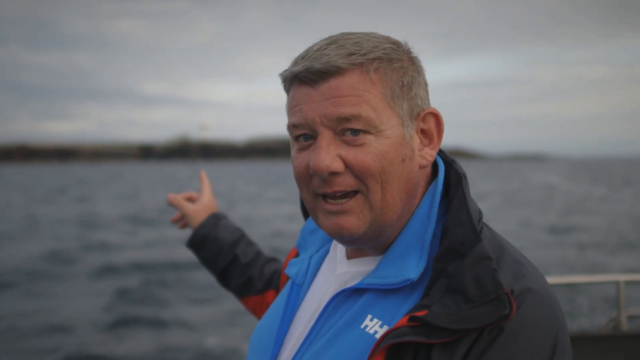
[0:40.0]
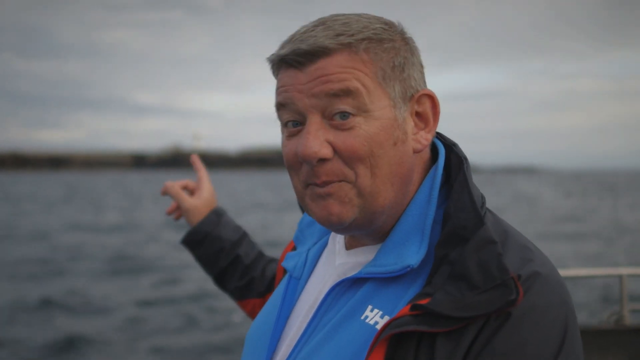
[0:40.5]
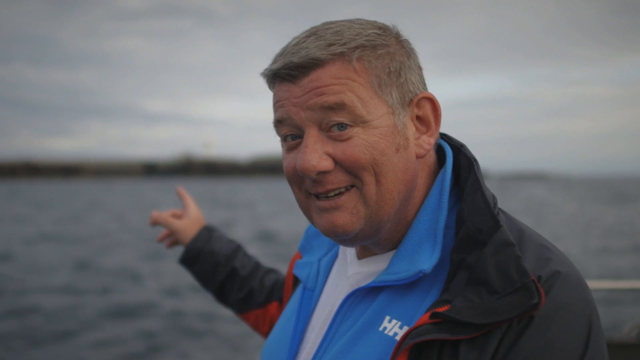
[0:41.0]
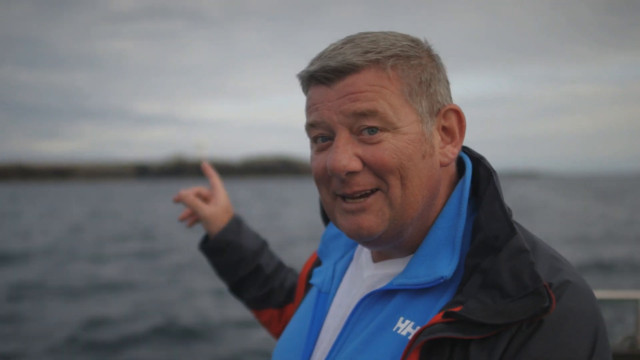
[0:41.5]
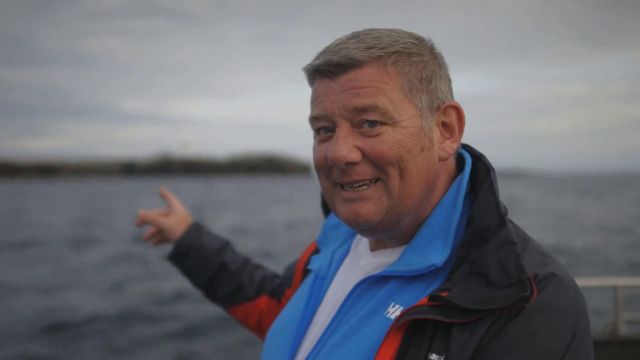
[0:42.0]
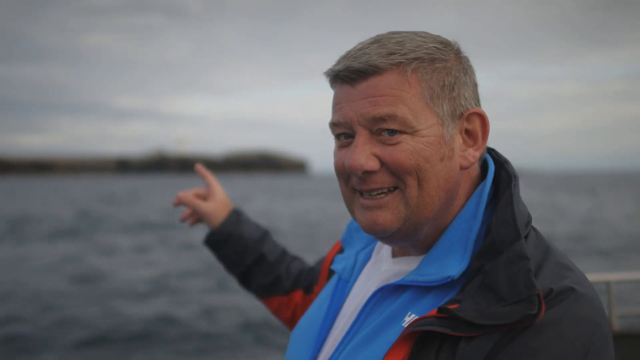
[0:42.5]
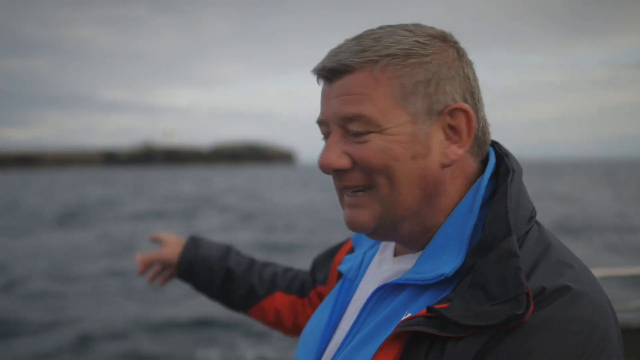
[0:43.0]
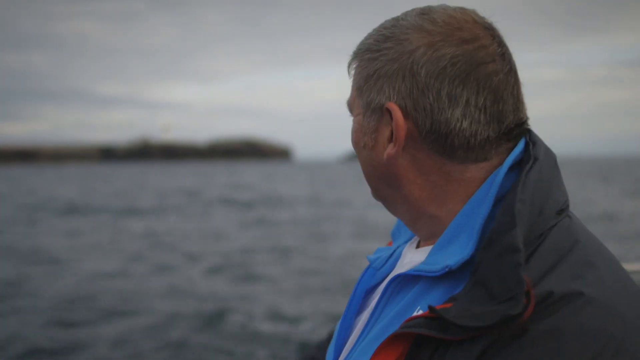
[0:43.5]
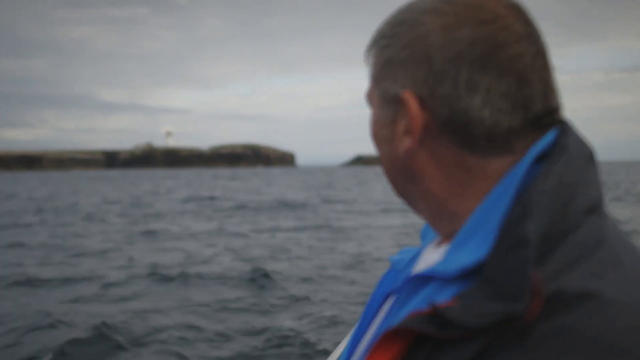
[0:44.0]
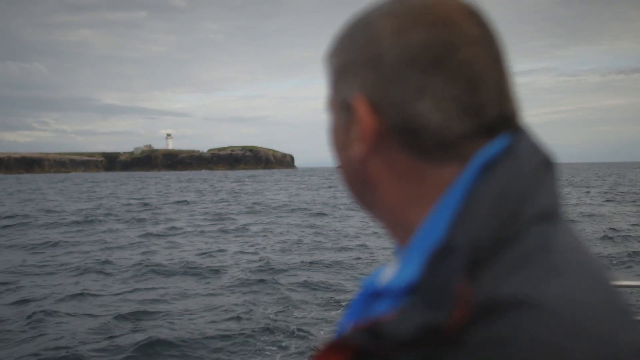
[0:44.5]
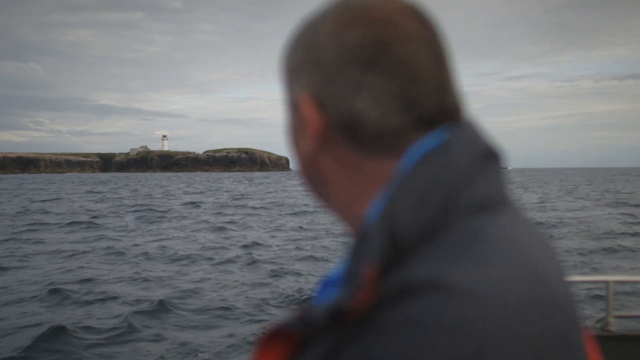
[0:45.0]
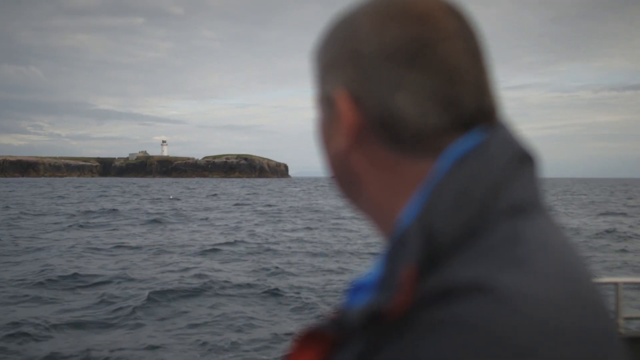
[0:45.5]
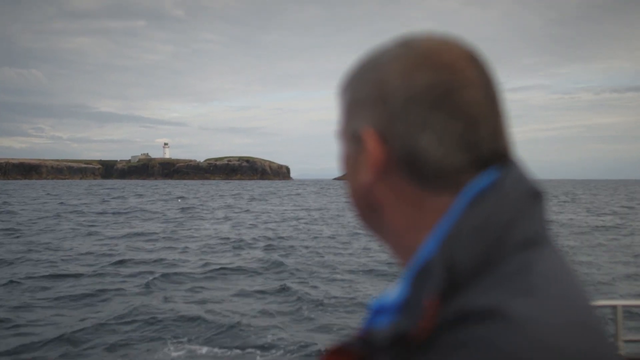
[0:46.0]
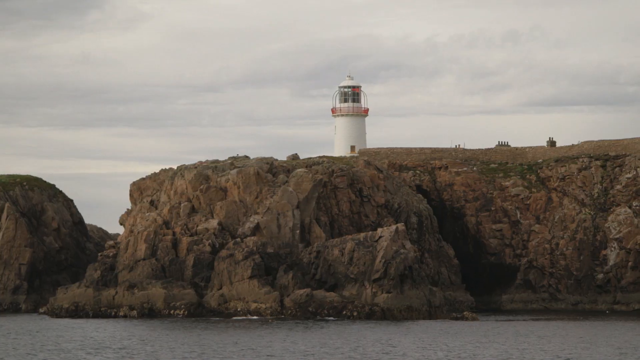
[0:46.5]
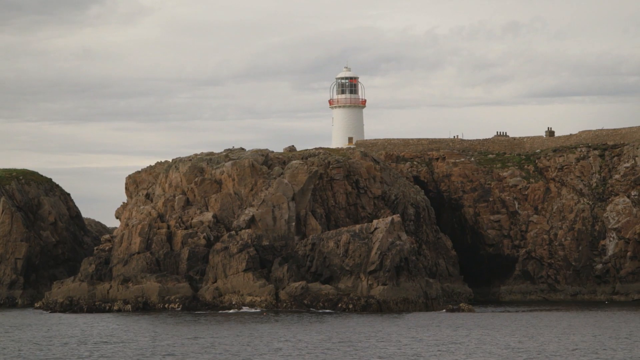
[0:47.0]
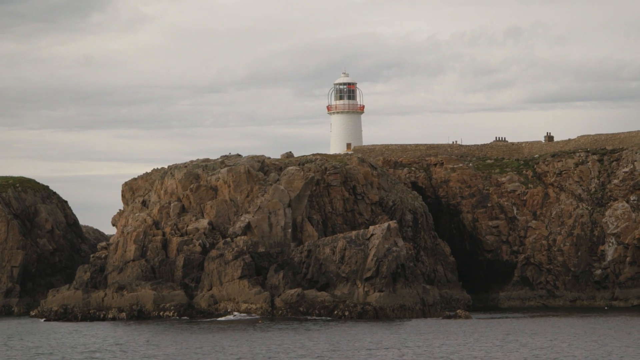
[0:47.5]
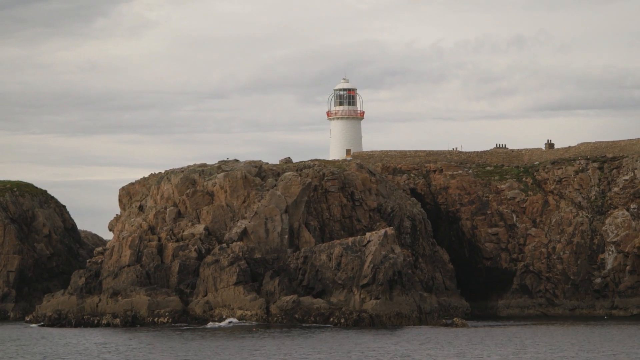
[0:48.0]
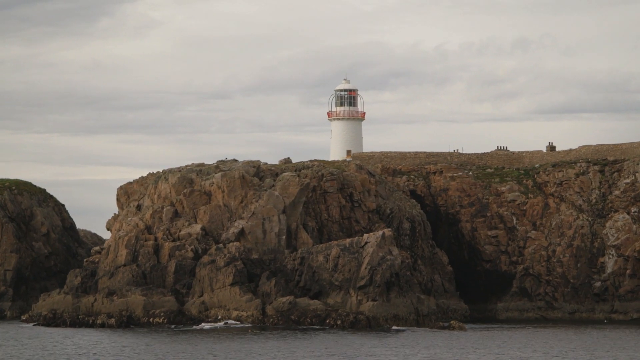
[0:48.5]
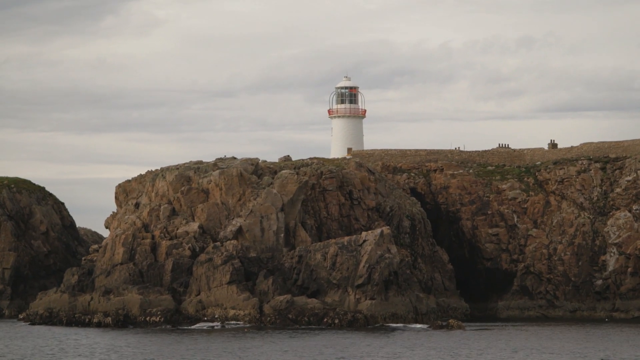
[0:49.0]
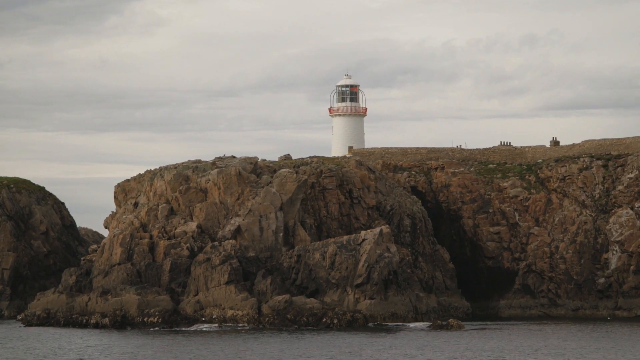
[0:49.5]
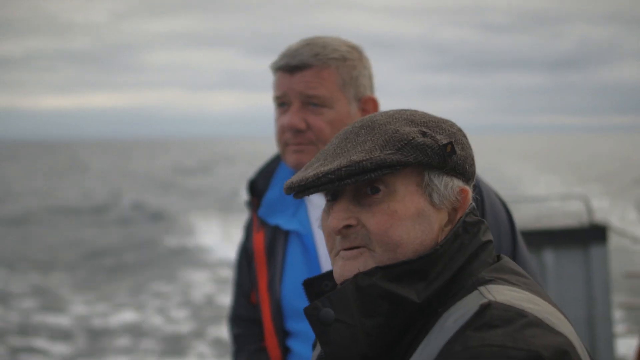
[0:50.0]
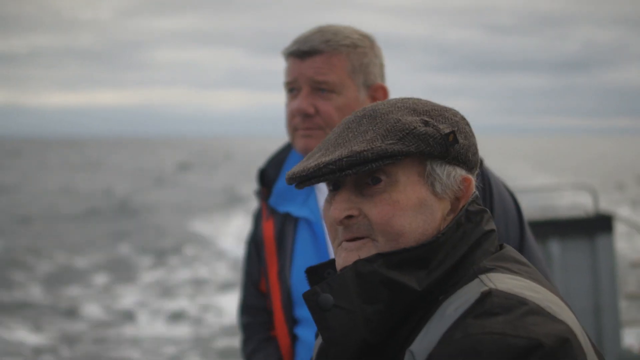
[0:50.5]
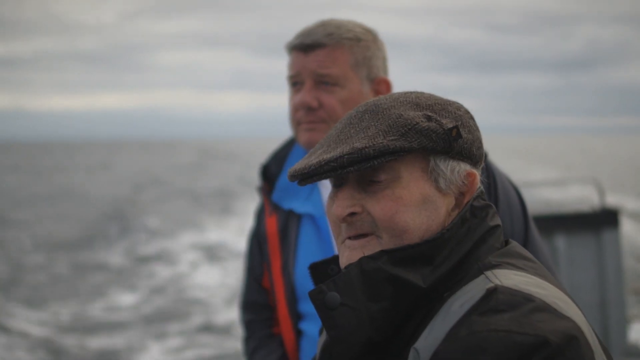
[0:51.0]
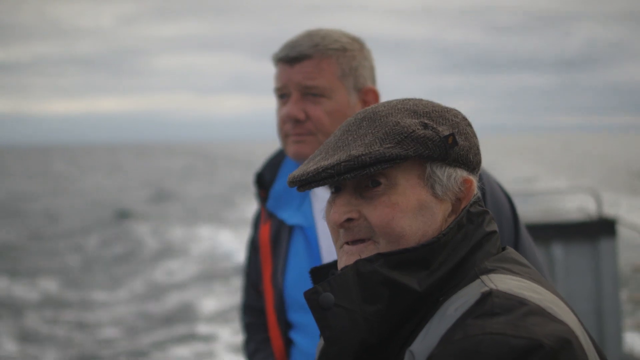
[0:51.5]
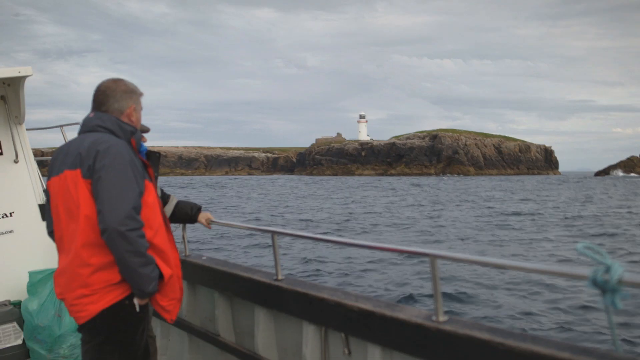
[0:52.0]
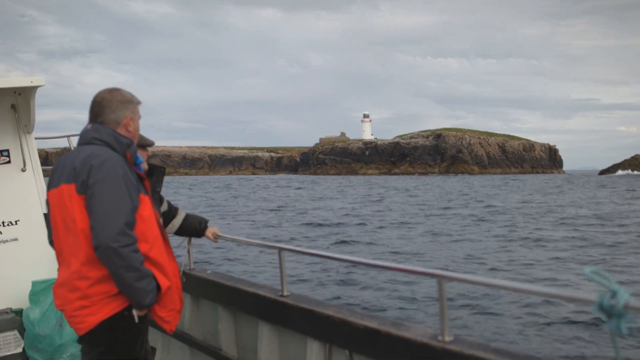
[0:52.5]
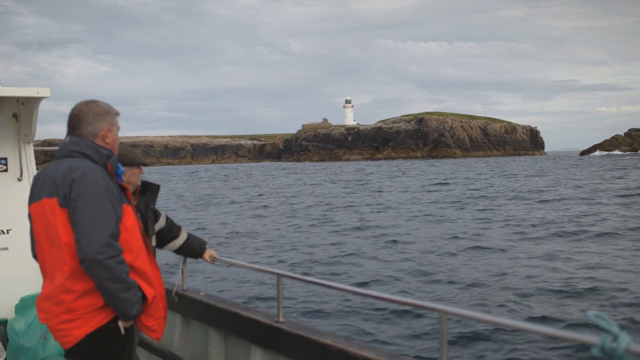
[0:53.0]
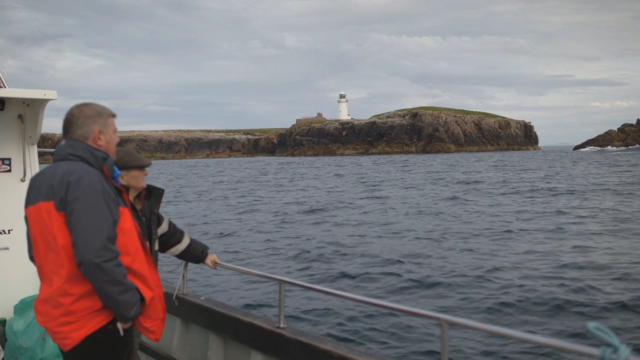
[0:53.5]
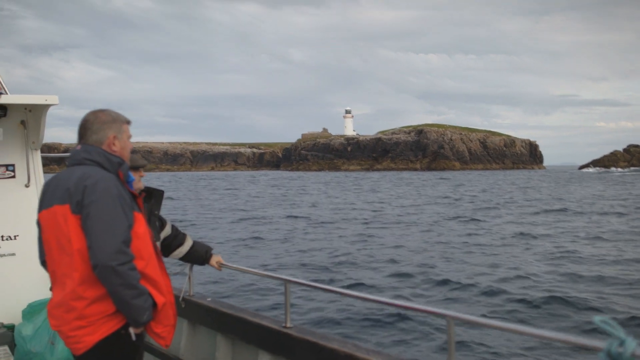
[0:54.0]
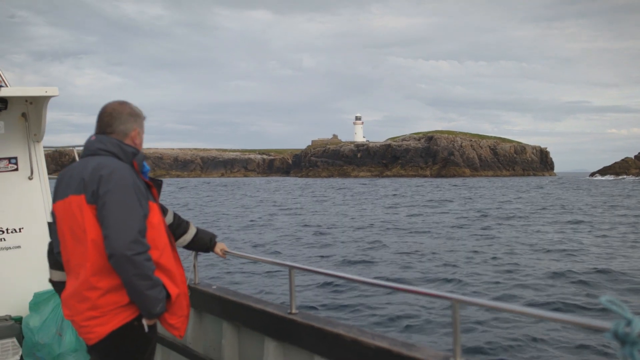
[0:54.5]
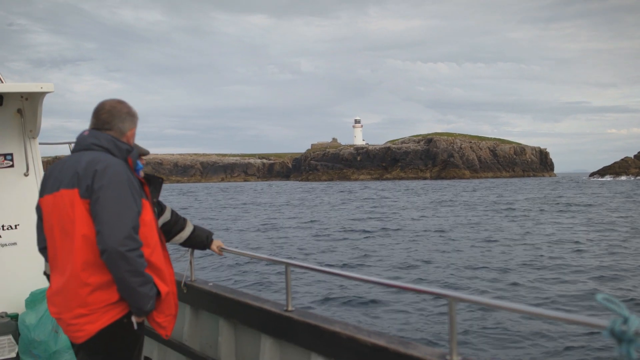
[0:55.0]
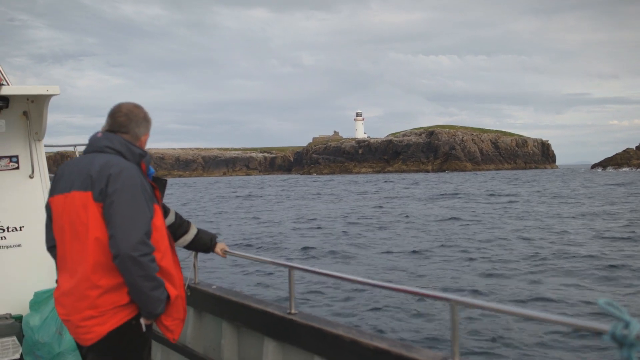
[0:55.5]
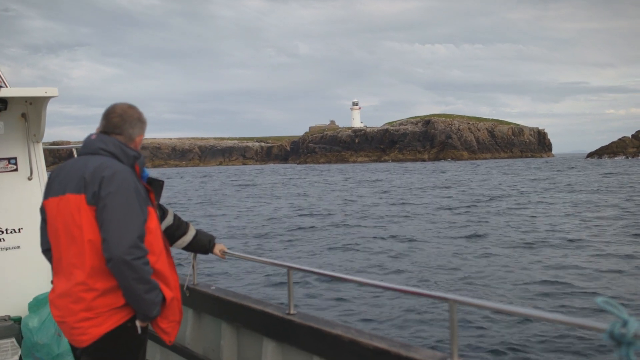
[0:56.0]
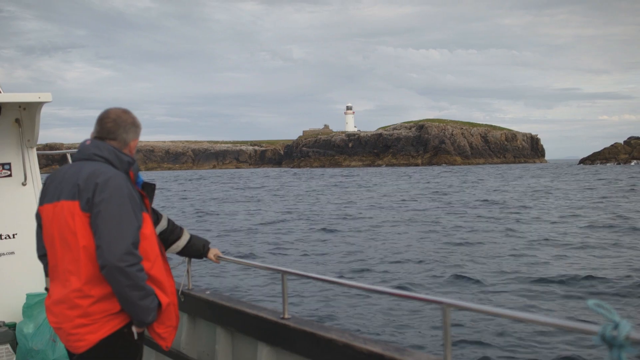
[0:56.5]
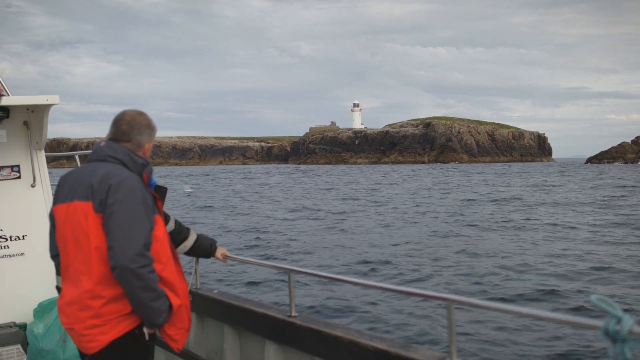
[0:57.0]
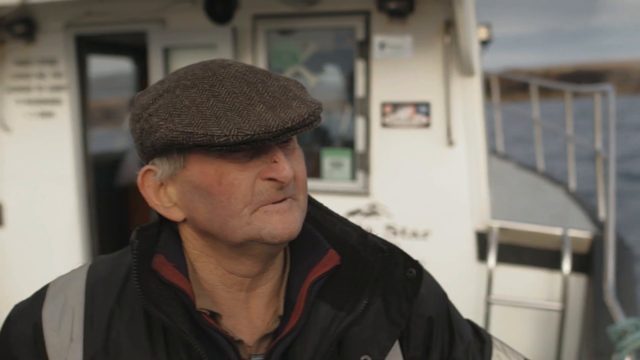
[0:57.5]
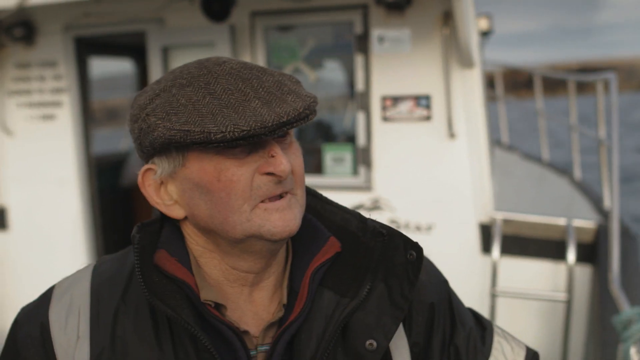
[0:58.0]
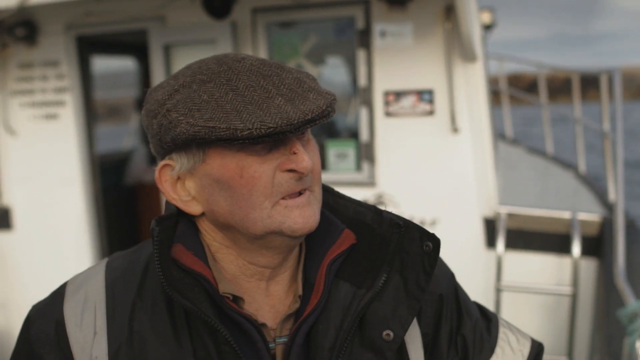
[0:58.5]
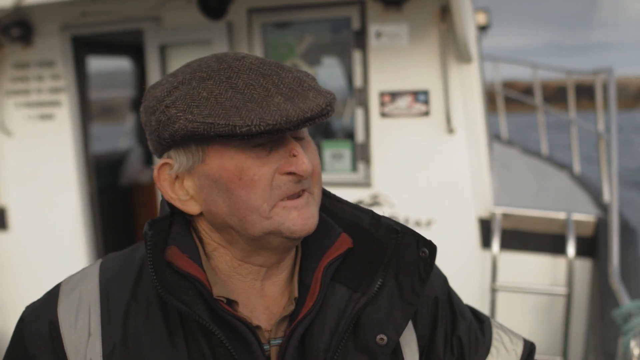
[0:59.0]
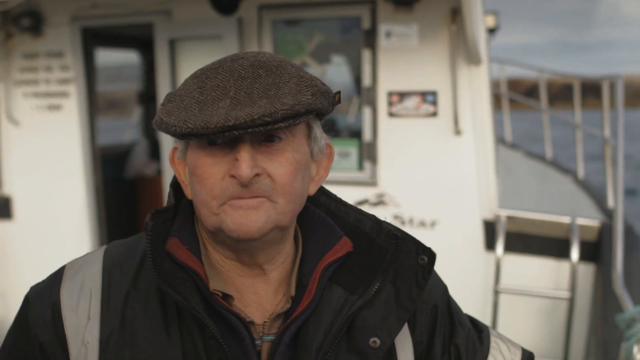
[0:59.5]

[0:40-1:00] The man continues to speak and points at the island plateau with the lighthouse atop it, and the rocky shores are shown. An old man who looks like he is nearing death appears; he is sort of dressed like Sherlock Holmes but more impoverished, and he is apparently the captain of the vessel they are drifting on. The two men speak to one another.